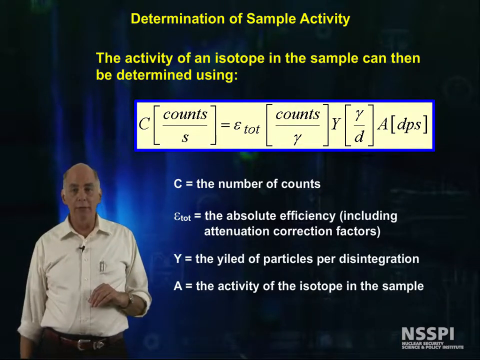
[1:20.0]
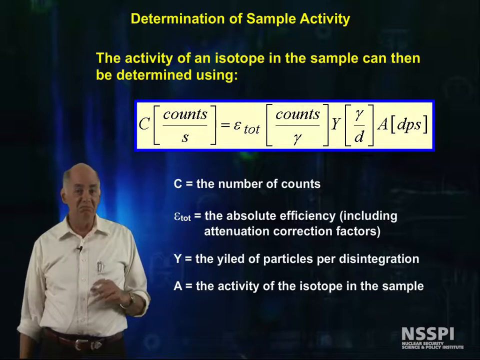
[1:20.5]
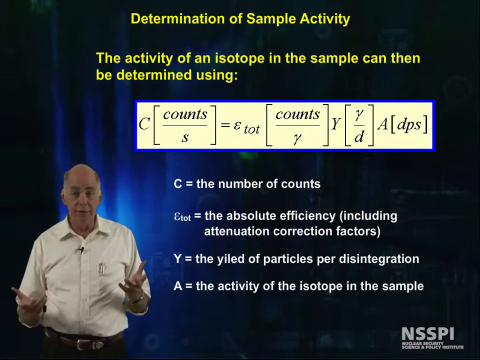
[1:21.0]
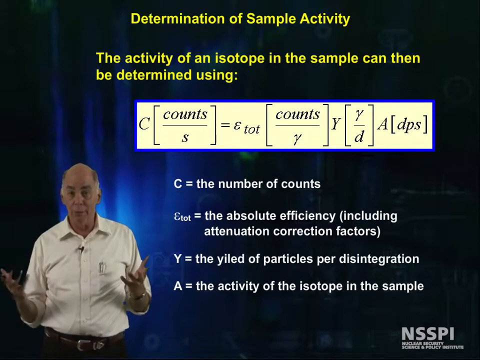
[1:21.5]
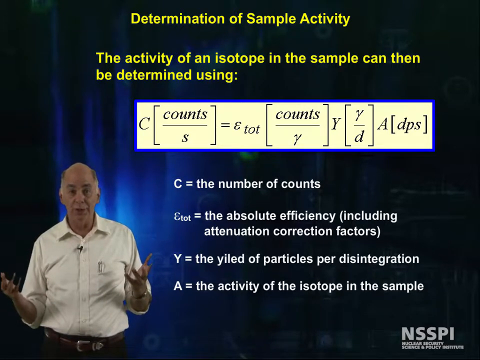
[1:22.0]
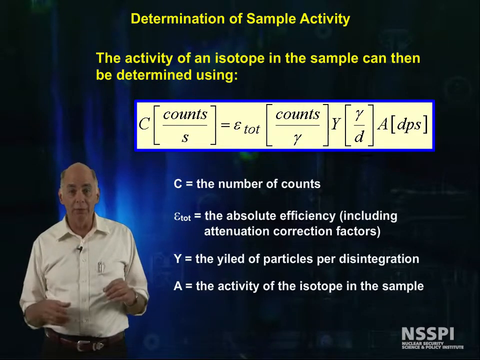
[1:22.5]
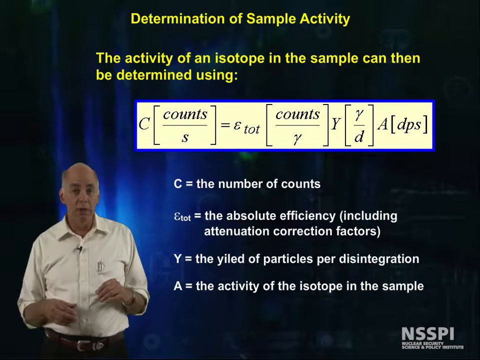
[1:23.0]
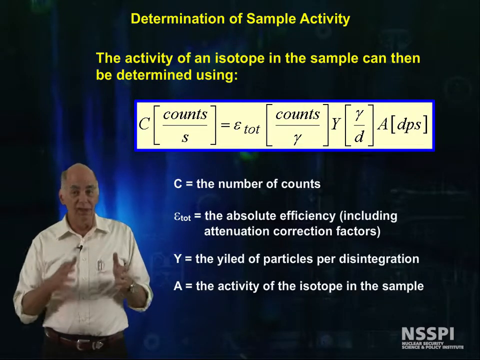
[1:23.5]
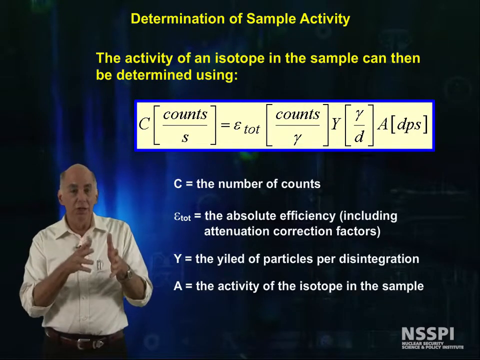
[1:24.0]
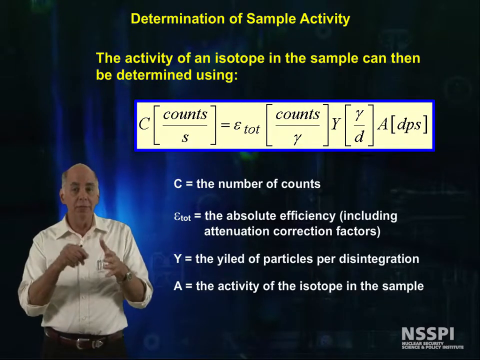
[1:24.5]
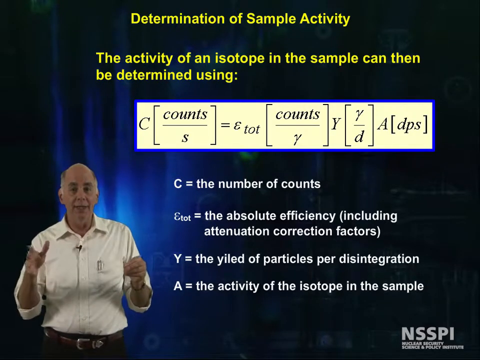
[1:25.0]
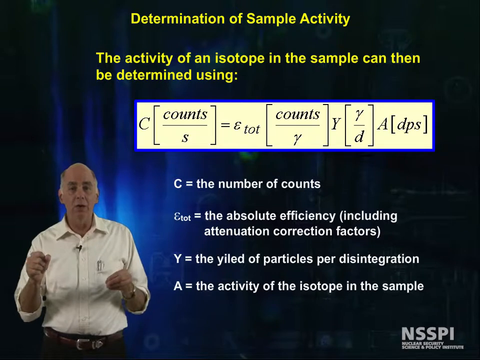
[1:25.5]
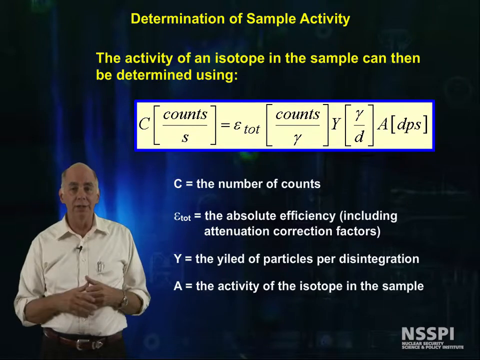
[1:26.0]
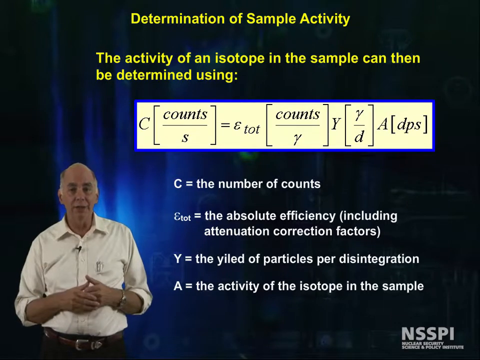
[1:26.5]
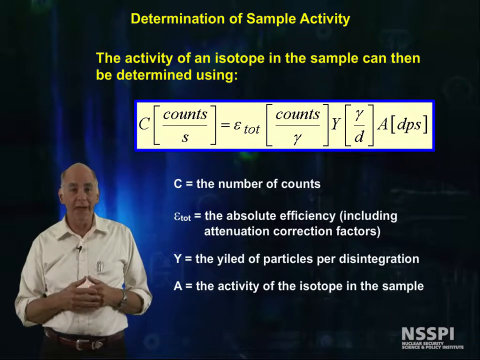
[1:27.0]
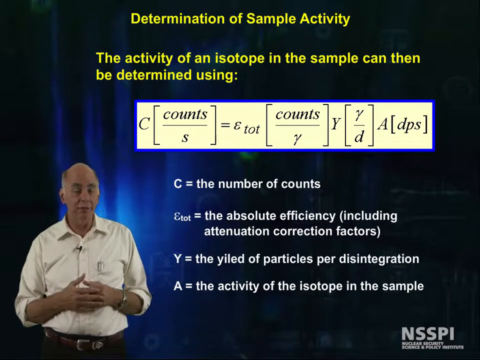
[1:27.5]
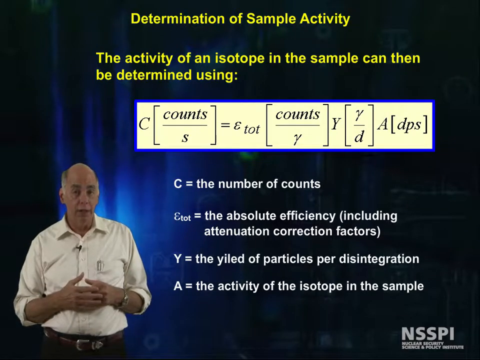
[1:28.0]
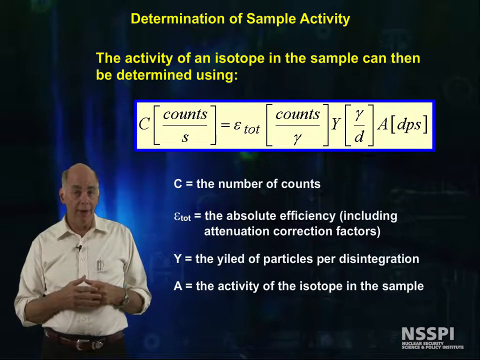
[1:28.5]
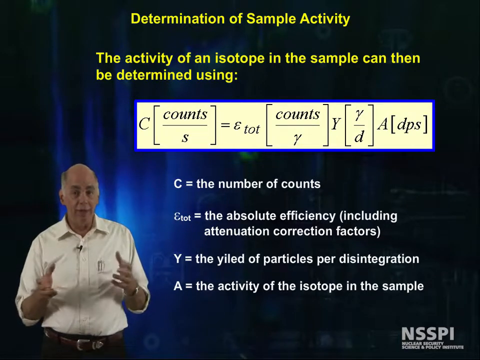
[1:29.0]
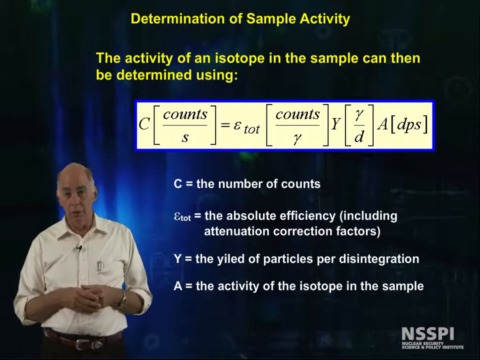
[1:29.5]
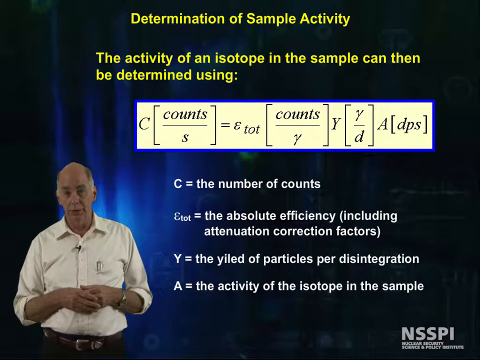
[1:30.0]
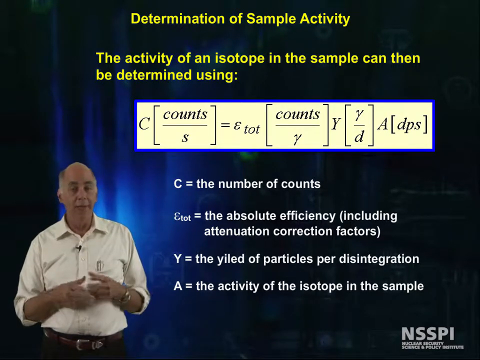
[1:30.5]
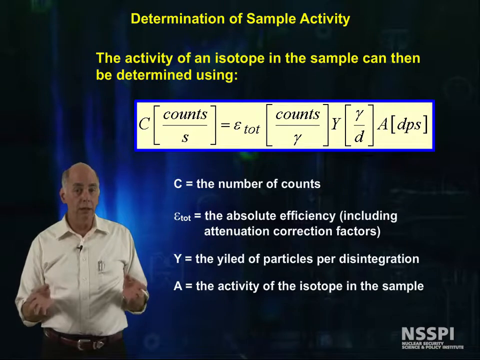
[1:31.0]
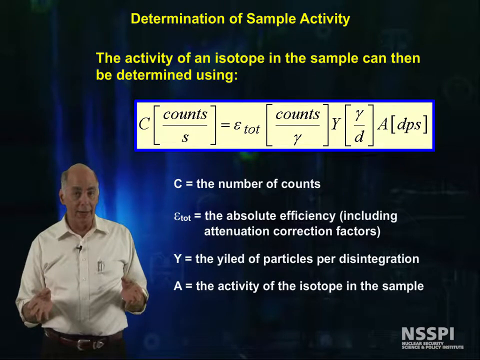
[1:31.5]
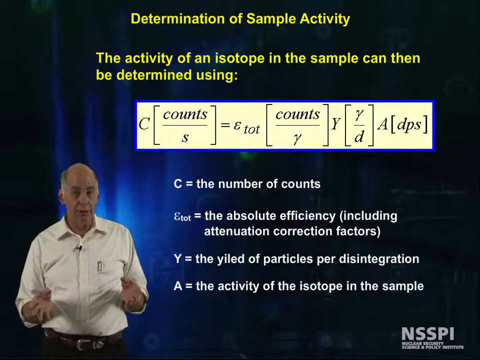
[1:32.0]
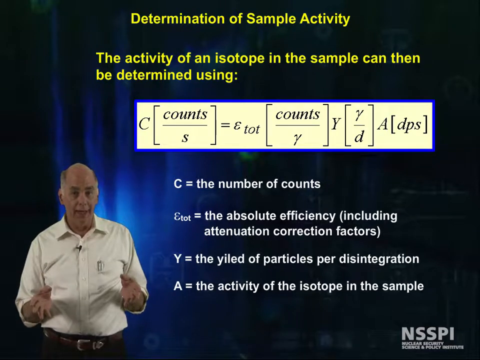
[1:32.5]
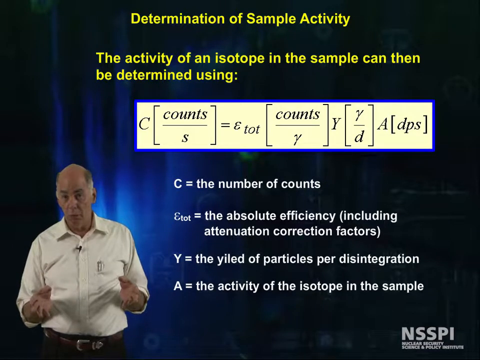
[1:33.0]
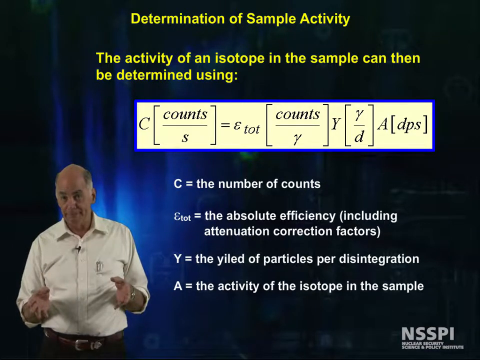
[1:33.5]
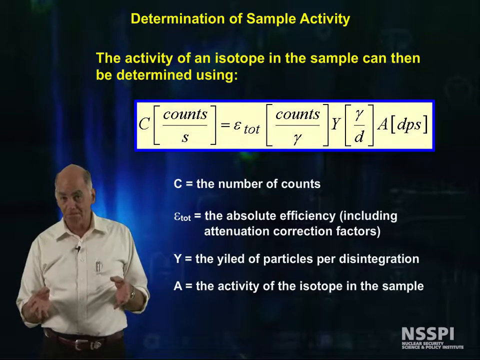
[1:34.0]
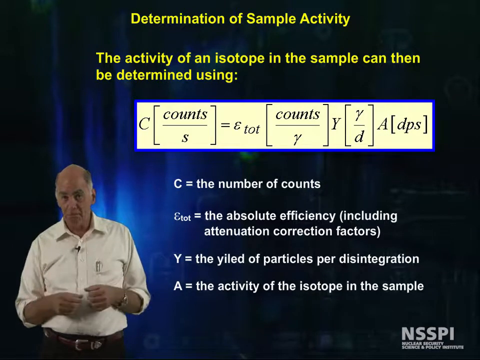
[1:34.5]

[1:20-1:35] A man stands in the left corner of the frame with scientific information displayed. The screen behind him is dark blue and black, against which the text stands out in bright yellow and white, with some blue outlining a mathematical problem. In the lower right corner is the logo "NSSPI" with "Nuclear Security Science and Policy Institute." The man speaks quite animatedly with his hands. The text reads "Determination of Sample Activity. The activity of an isotope in the sample can then be determined using," followed by a formula in algebraic form. Below it reads "C equals the number of counts, y equals the yield of particles per disintegration, and a equals the activity of the isotope in the sample."